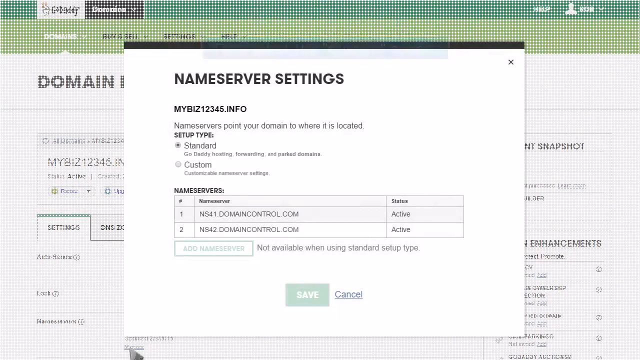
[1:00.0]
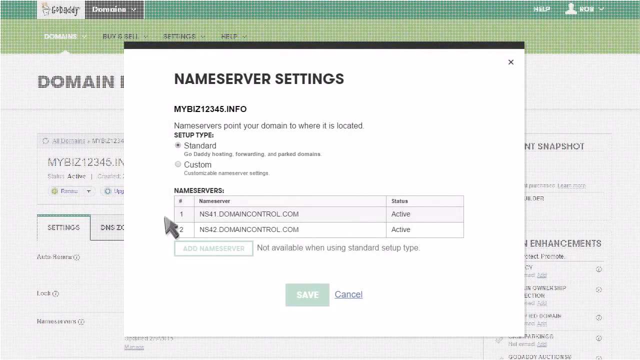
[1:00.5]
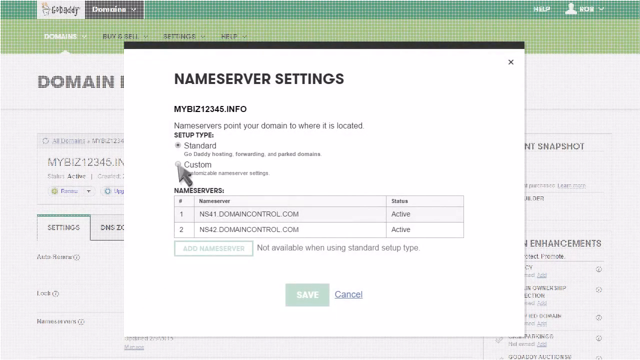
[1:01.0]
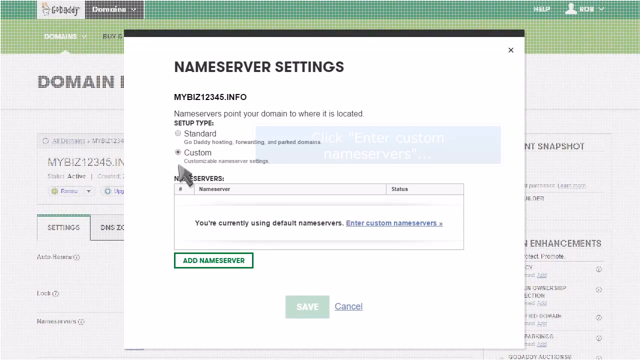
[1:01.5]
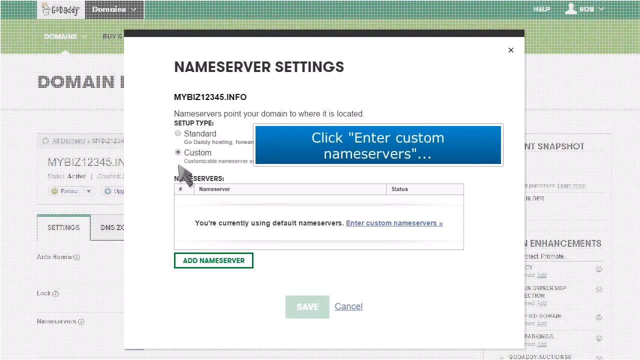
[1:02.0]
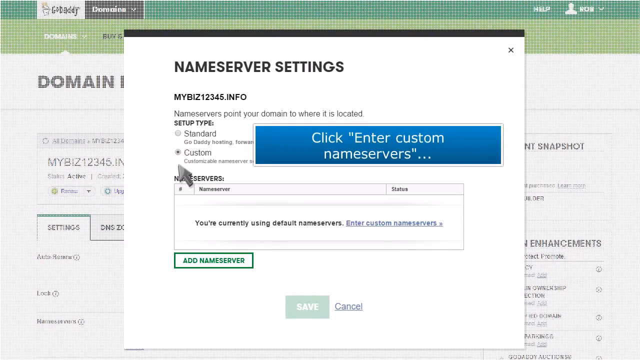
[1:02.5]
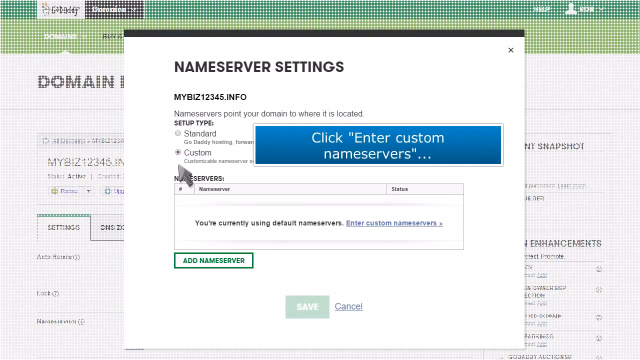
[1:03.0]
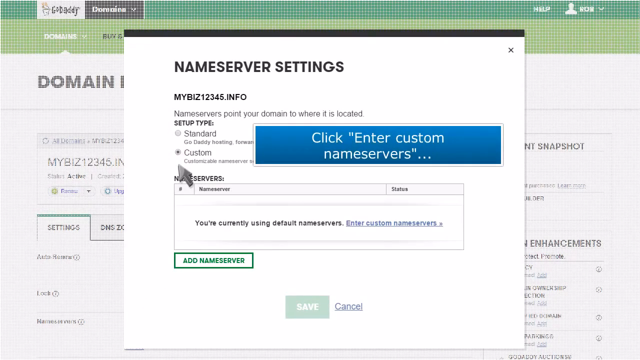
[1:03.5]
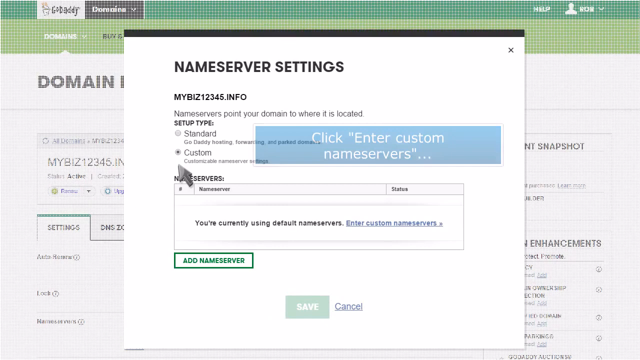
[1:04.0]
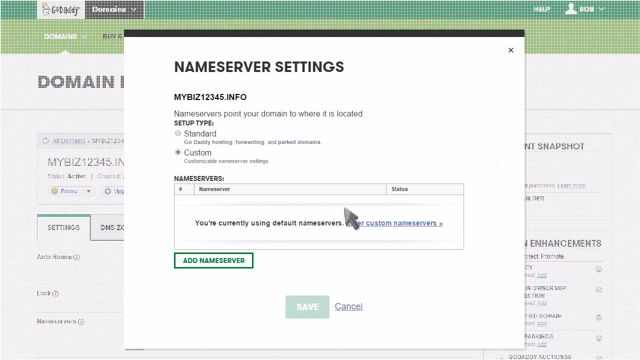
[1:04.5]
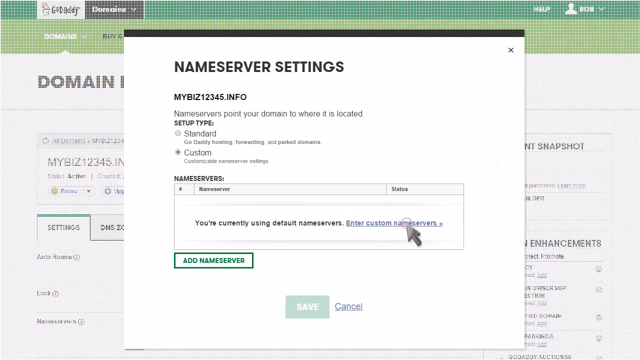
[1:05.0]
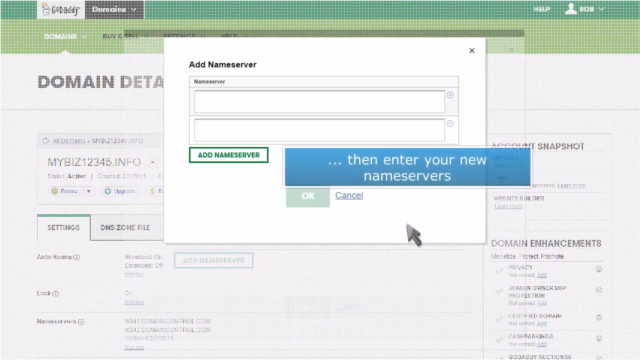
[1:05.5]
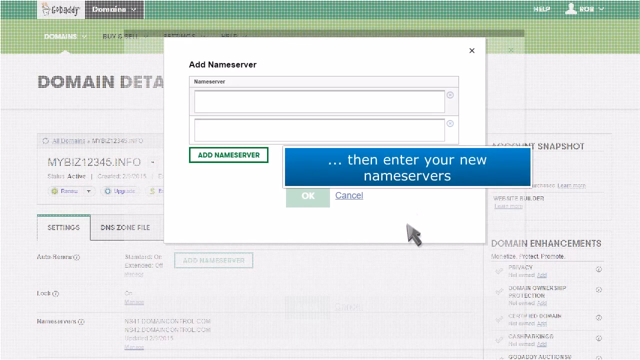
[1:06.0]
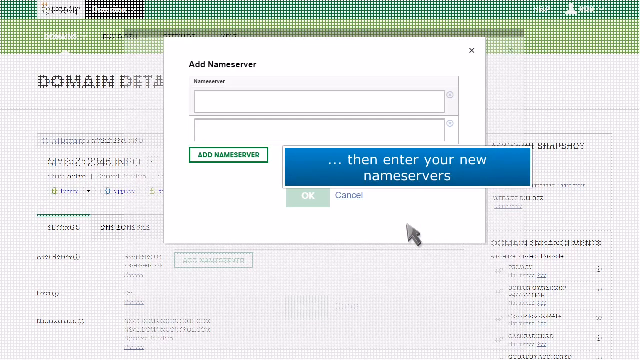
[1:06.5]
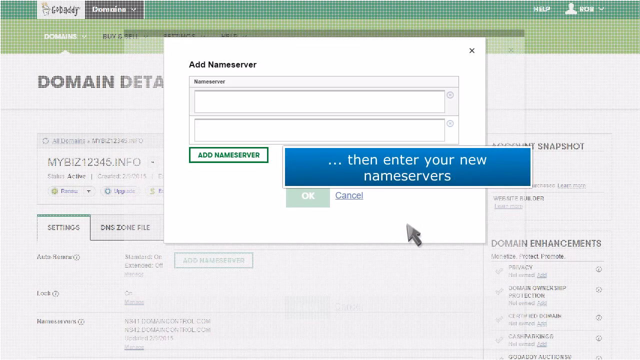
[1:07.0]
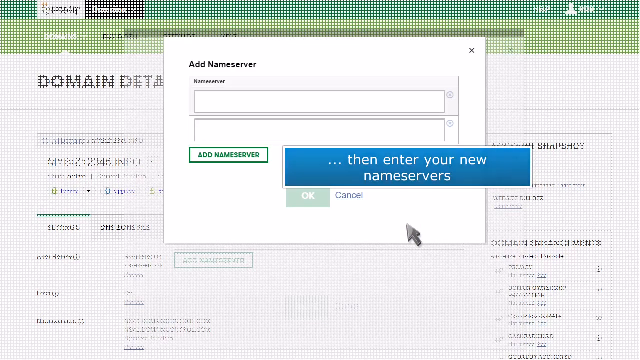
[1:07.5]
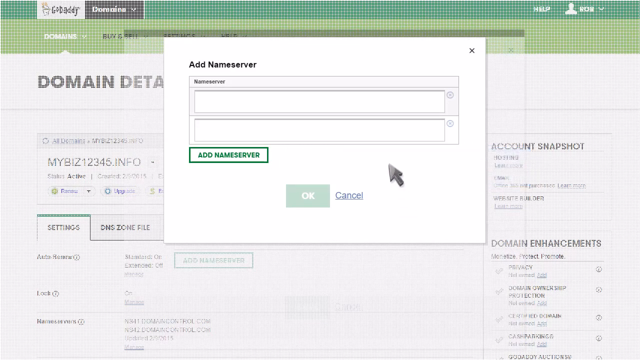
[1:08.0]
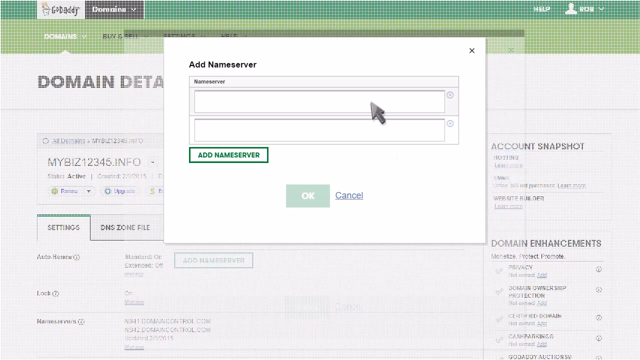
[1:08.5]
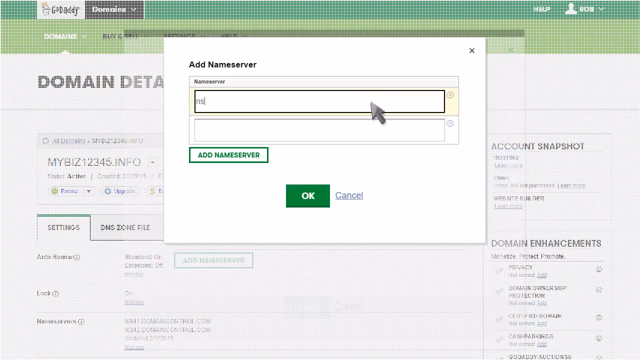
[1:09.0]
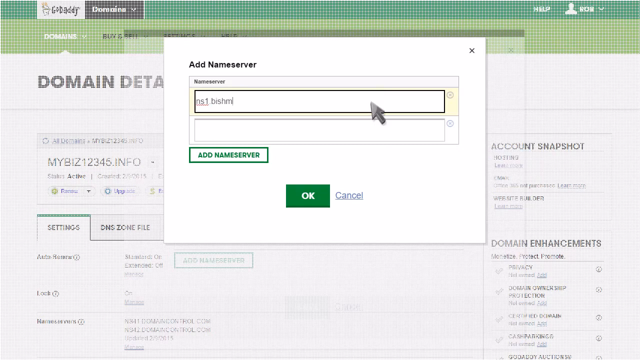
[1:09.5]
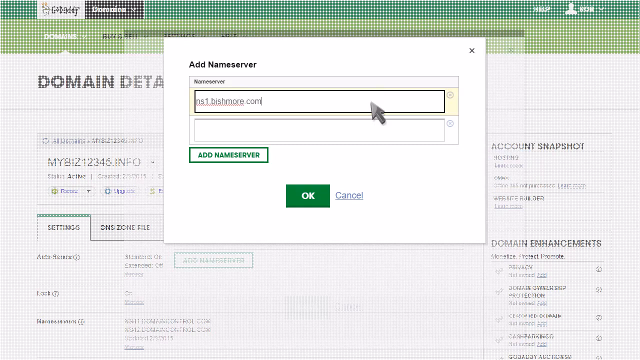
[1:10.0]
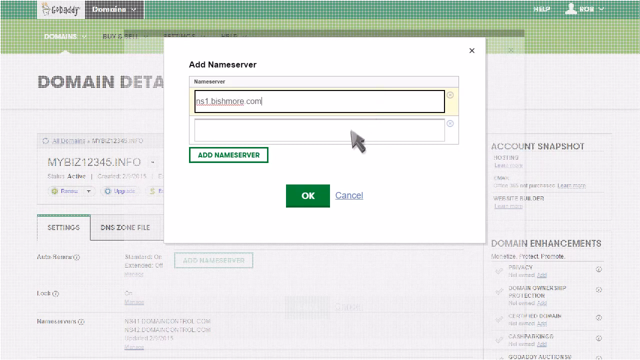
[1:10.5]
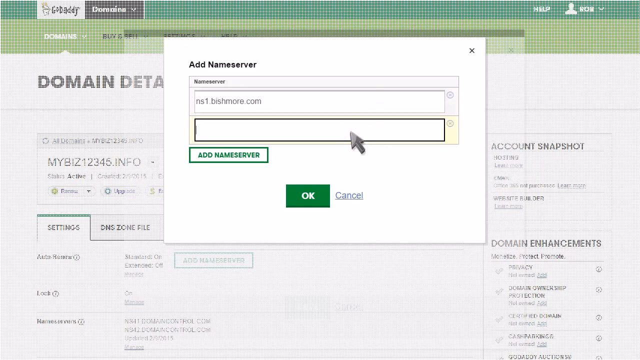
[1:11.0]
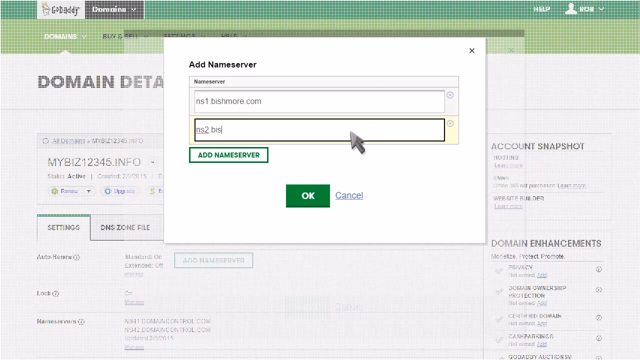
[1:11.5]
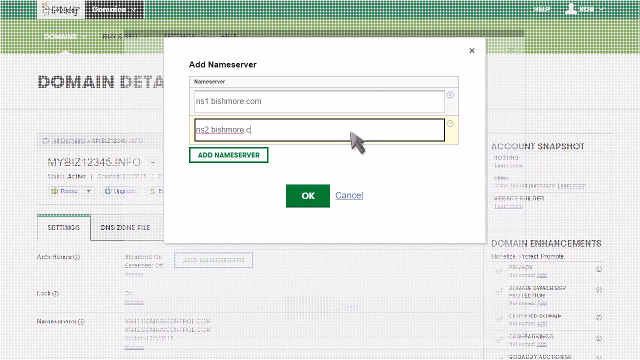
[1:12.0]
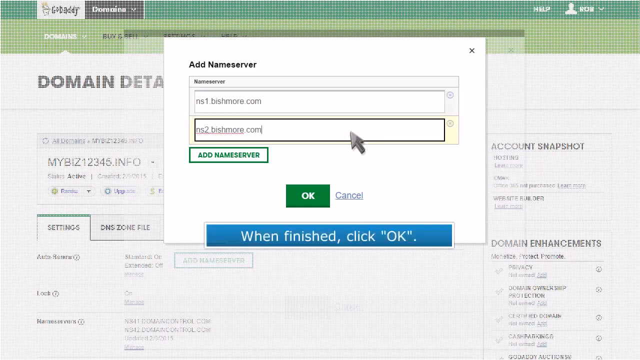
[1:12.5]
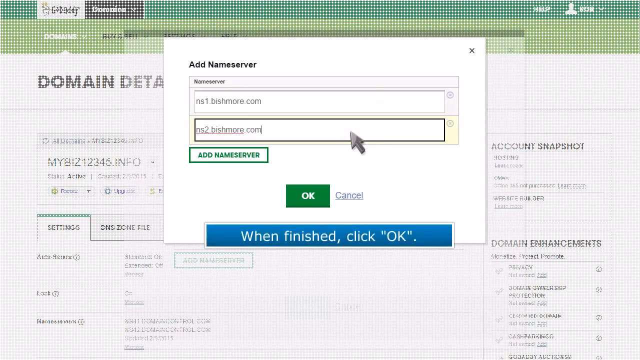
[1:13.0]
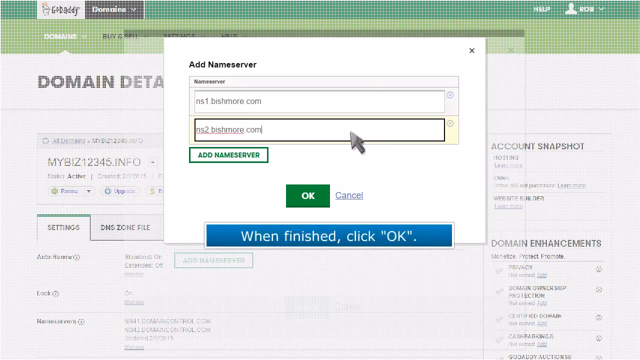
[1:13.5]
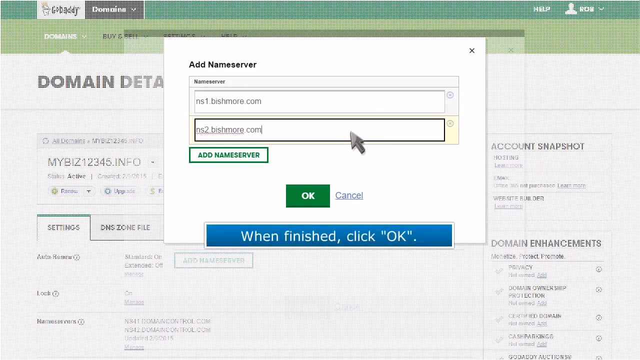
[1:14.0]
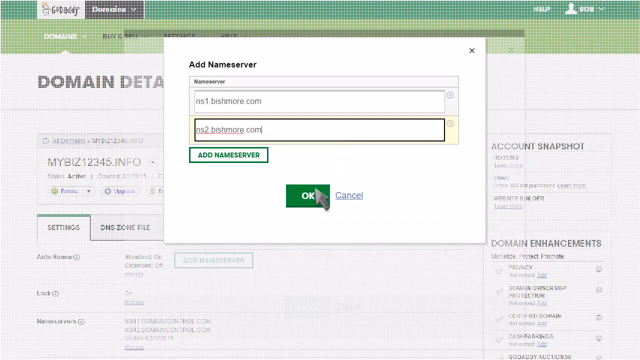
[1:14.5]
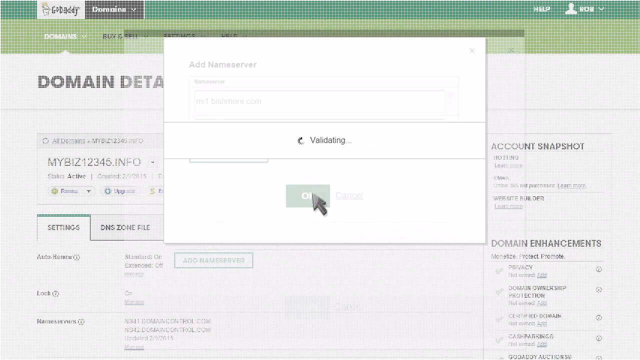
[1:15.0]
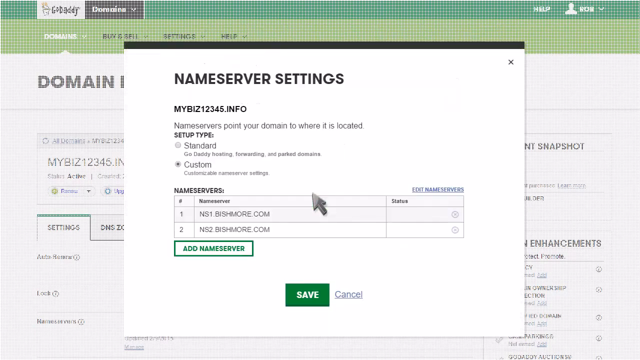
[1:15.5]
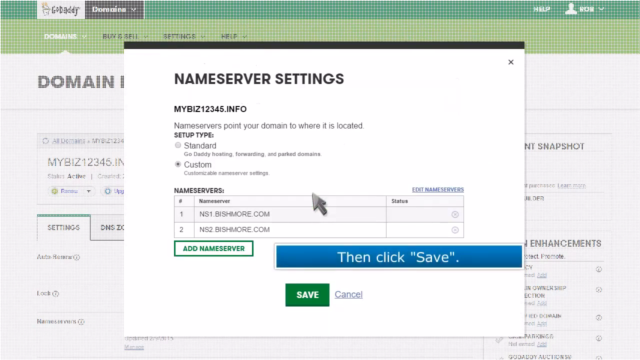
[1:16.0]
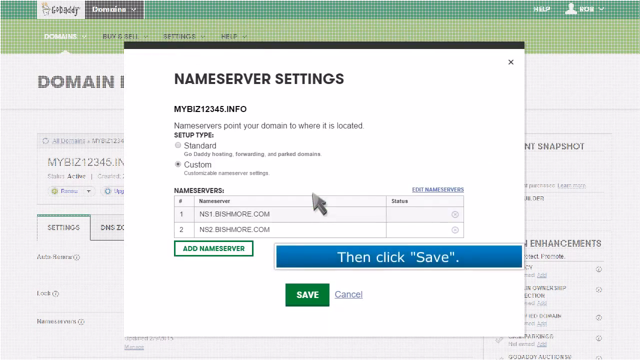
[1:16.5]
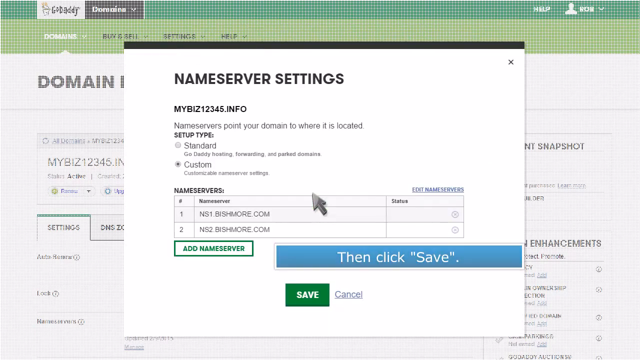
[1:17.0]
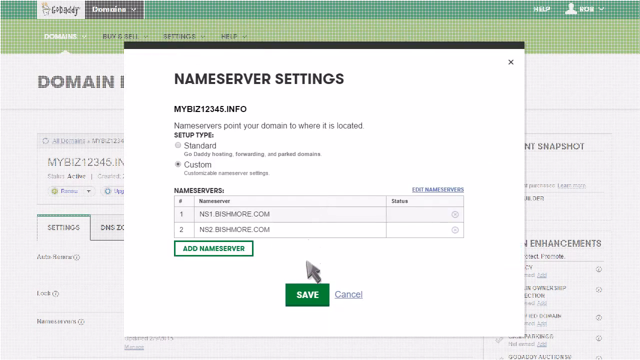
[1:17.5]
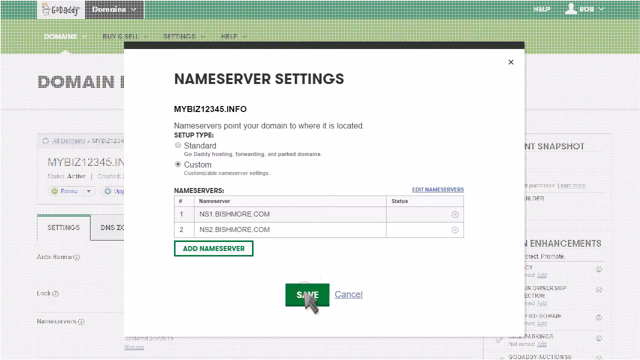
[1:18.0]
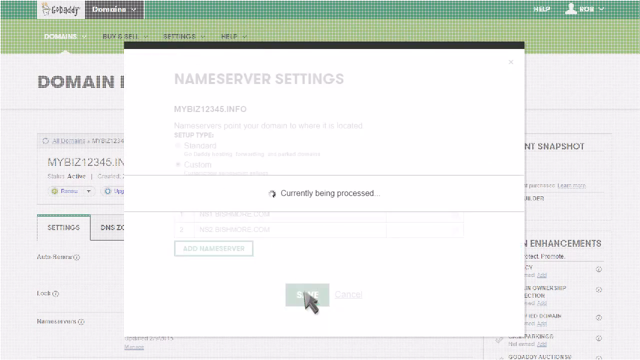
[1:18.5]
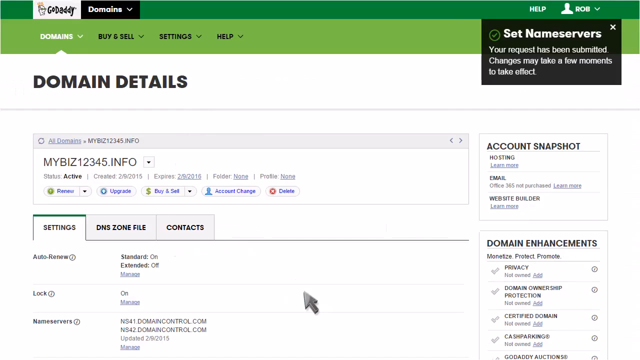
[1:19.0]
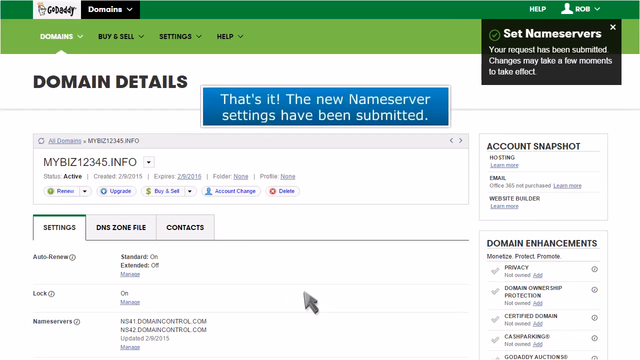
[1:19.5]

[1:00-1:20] With custom chosen, the new name servers are entered, OK is pressed, and save is clicked so the details are saved. The view then returns to the settings for managing the domain.